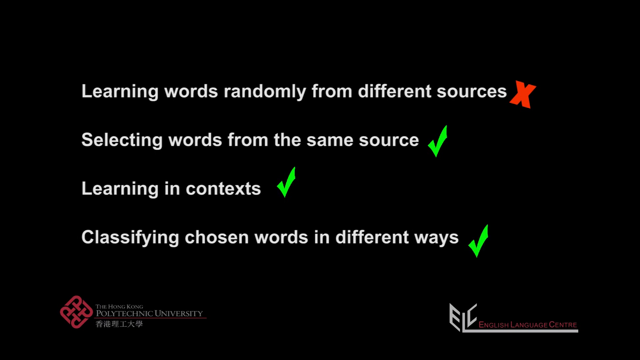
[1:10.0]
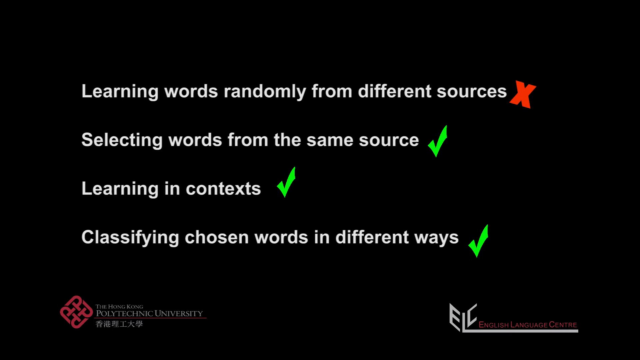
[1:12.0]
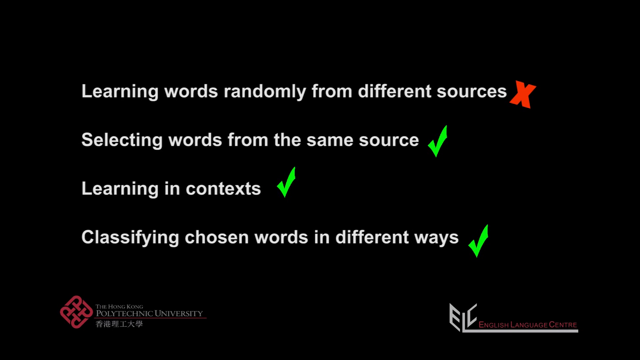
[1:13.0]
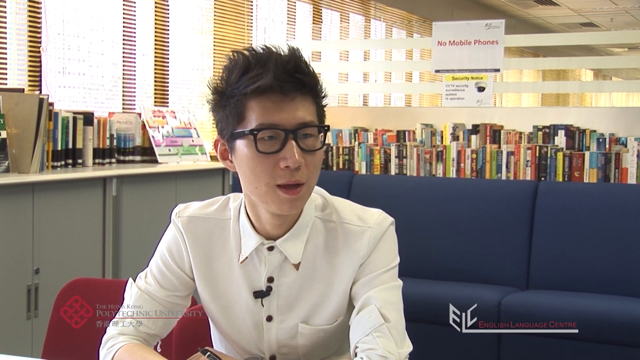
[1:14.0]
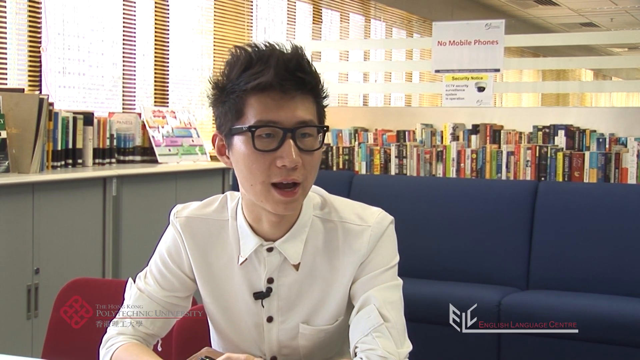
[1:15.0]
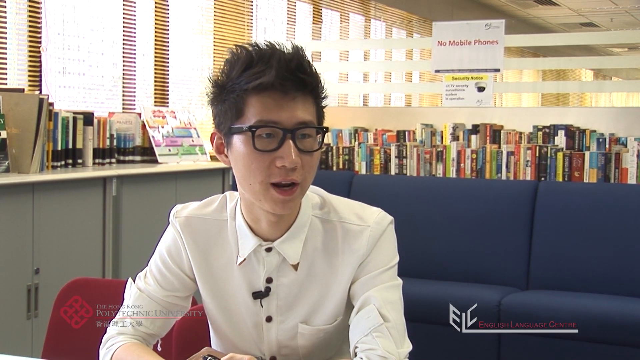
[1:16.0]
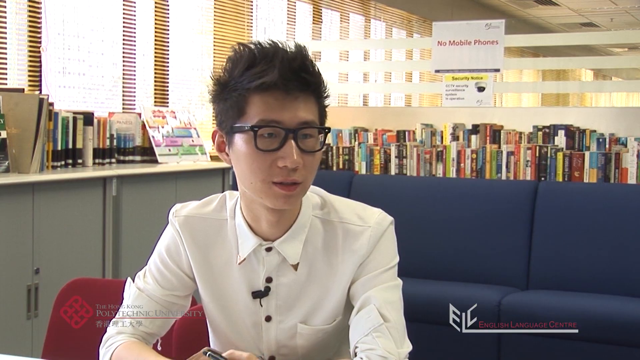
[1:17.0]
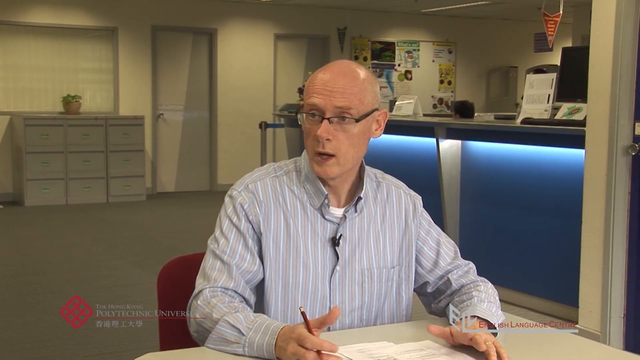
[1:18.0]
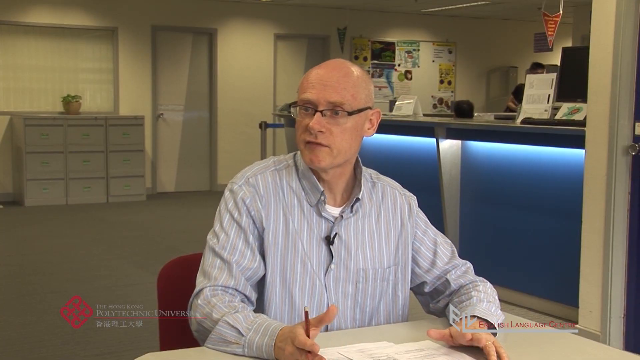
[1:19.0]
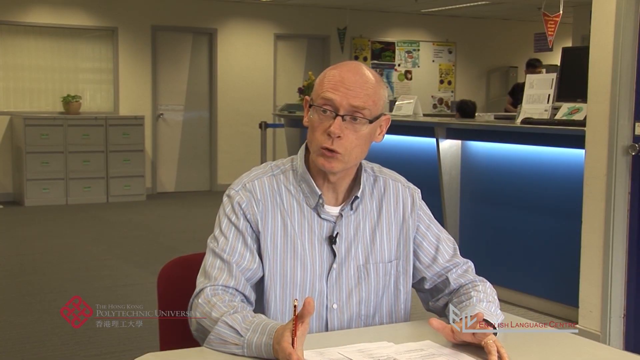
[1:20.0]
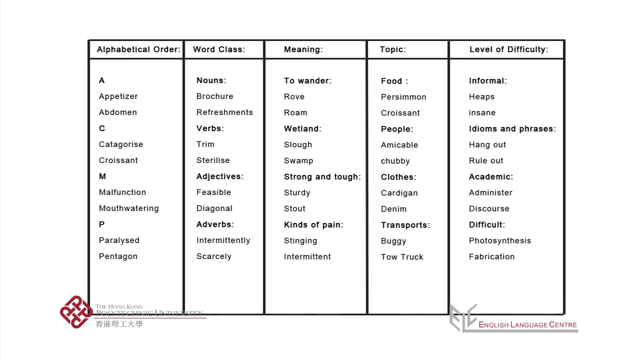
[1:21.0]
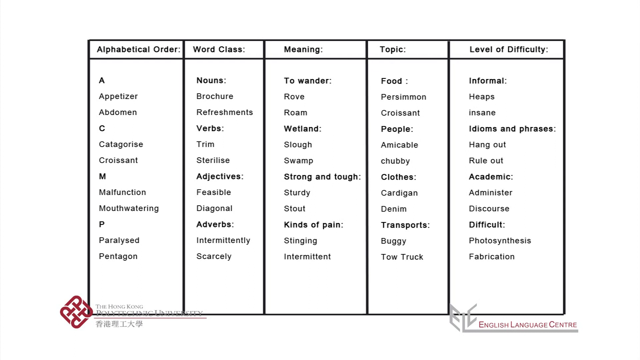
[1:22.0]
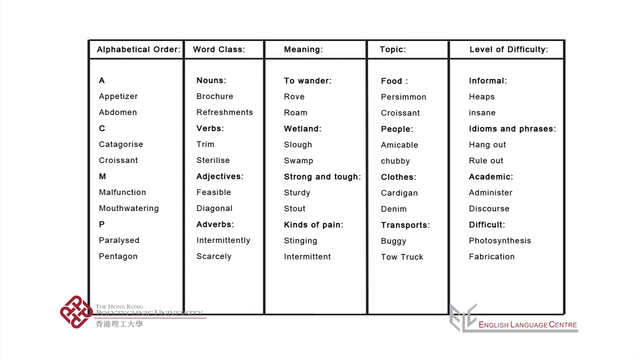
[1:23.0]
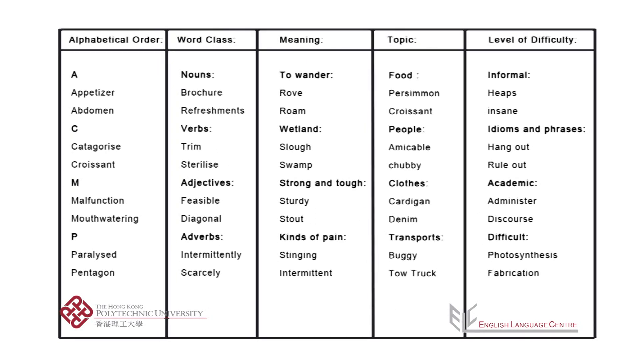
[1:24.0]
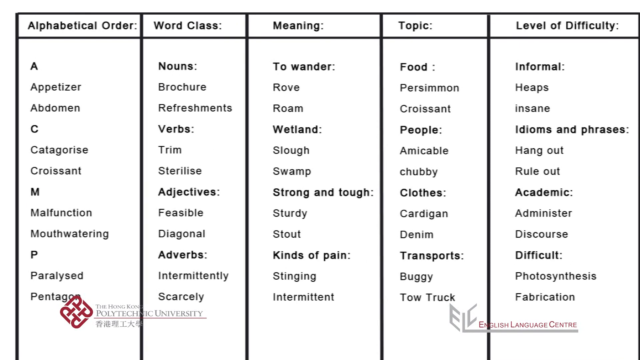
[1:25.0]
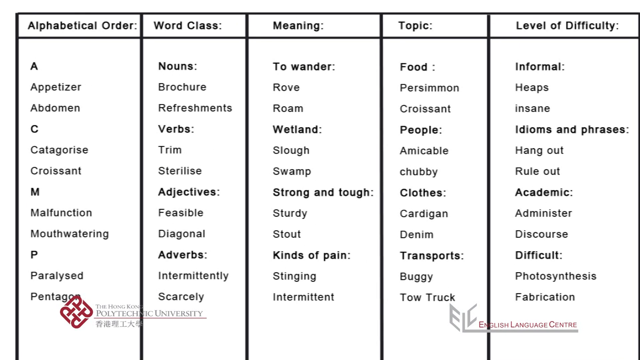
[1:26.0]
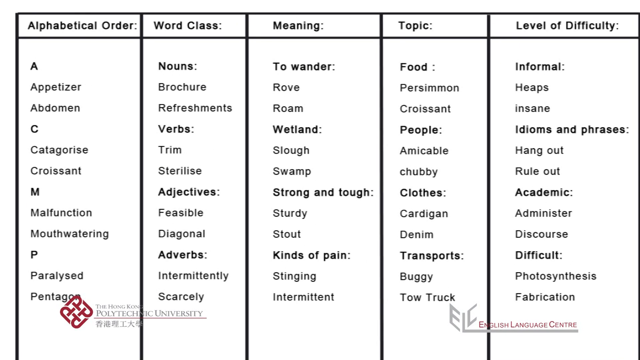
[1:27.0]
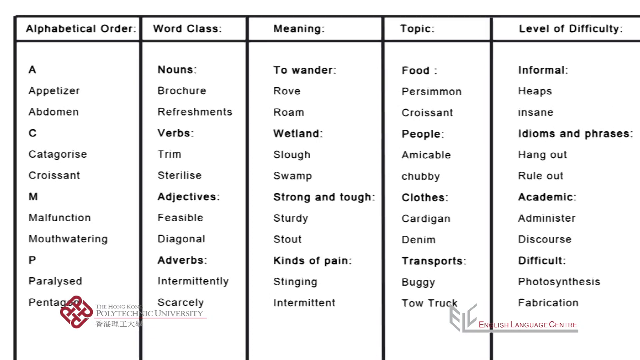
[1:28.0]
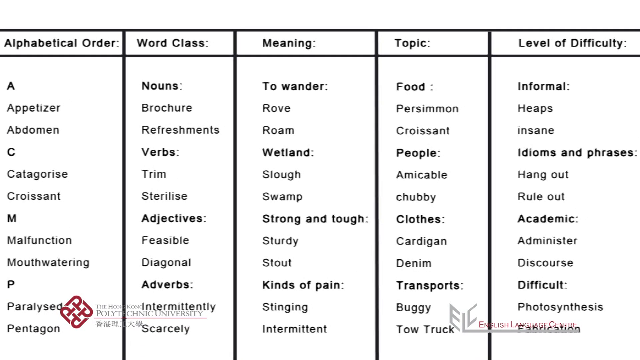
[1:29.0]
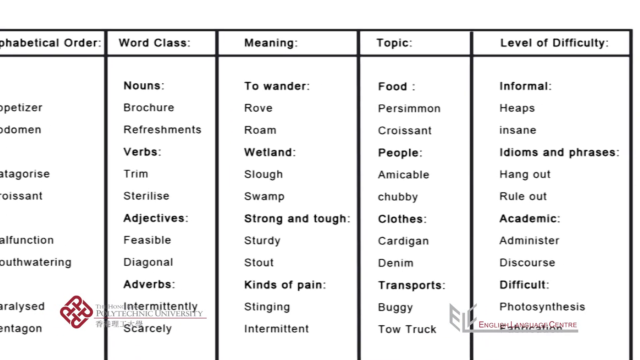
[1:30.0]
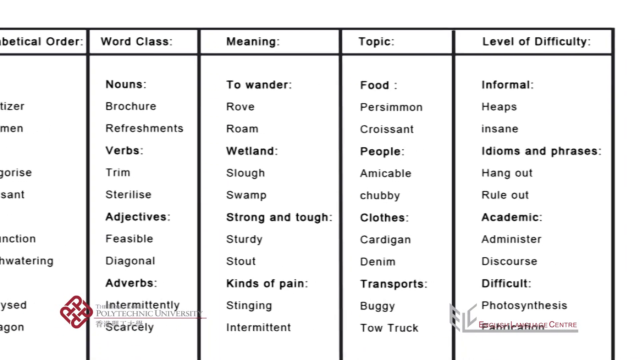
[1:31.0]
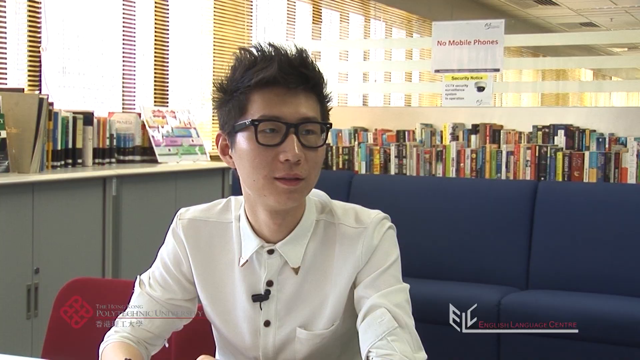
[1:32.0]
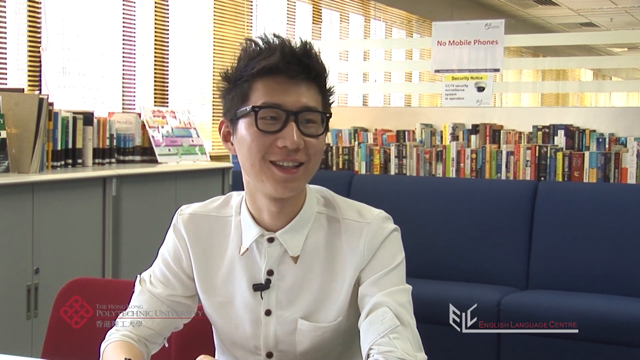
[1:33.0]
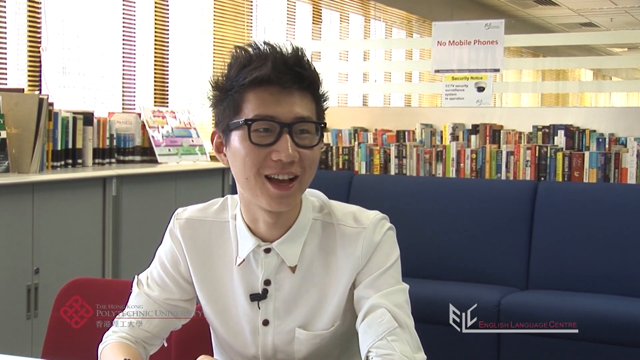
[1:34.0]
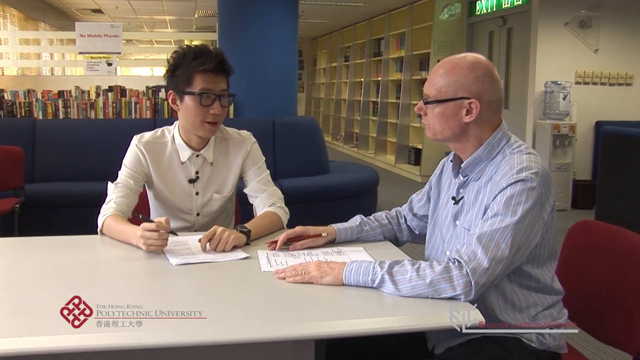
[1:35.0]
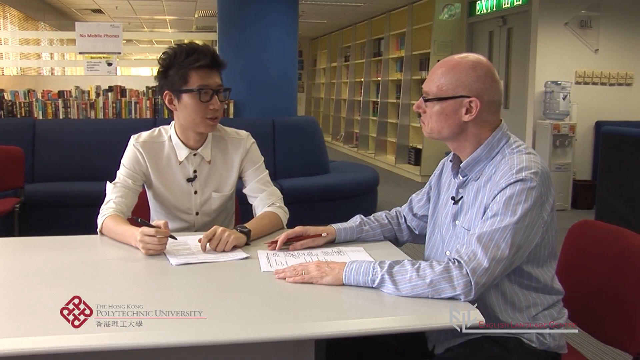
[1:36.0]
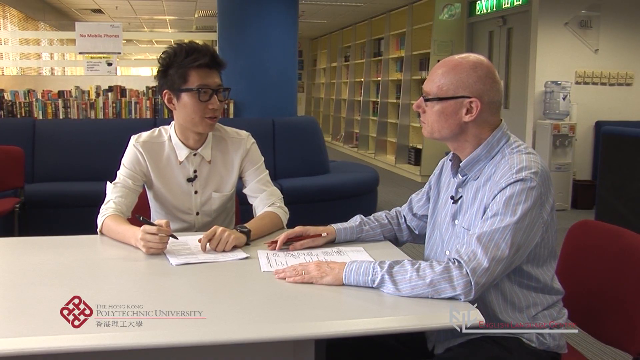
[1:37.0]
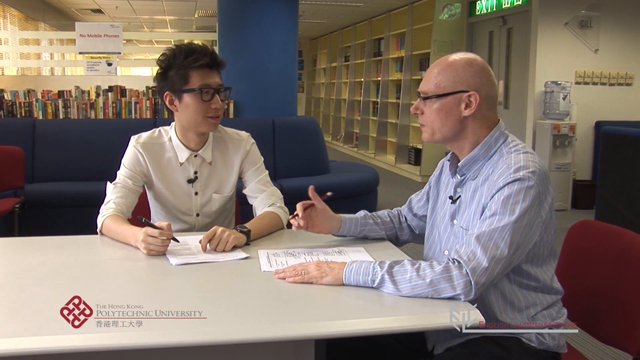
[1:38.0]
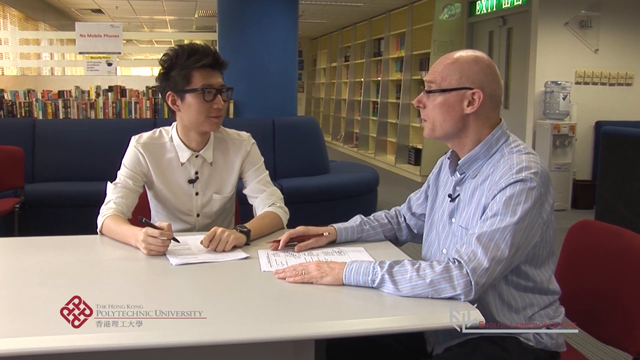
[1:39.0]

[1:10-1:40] A black slide shows words in white, with one red X and three checks. The X is at the right side of the first line, which reads "learning words randomly from different sources." The next three lines each have a green check: "selecting words from the same source," "learning in contexts," and "classifying chosen words in different ways." Then a student is shown sitting on a red chair in a library with books behind him. He wears a white shirt with metal tips at the ends of the collar and black buttons up the center, with a microphone attached. He is talking and looking to his left, toward the right of the screen; he has glasses and spiky black hair. Next the professor is shown sitting on a red chair, talking to the student and looking to the left. He also wears glasses, is bald, and has a vertically striped blue, white, and gray shirt with a microphone on it. Behind him is a counter in the library, where a staff member has just gone up to the counter.